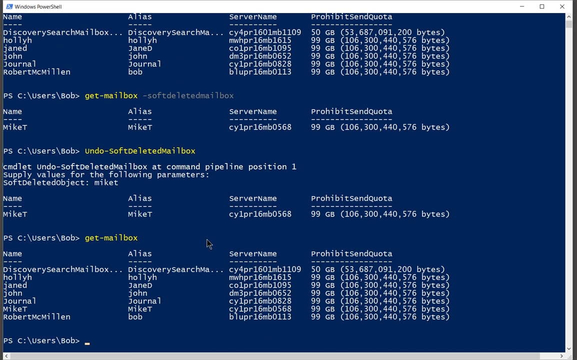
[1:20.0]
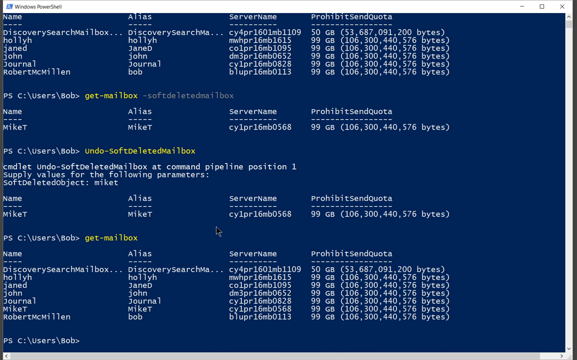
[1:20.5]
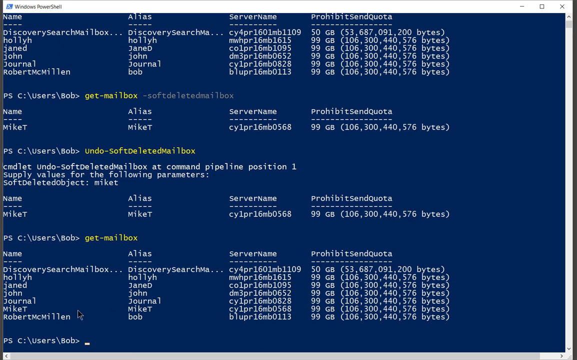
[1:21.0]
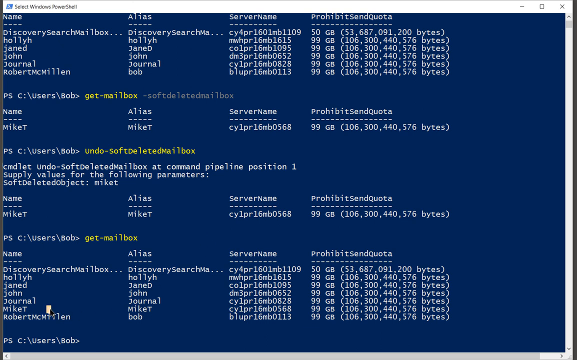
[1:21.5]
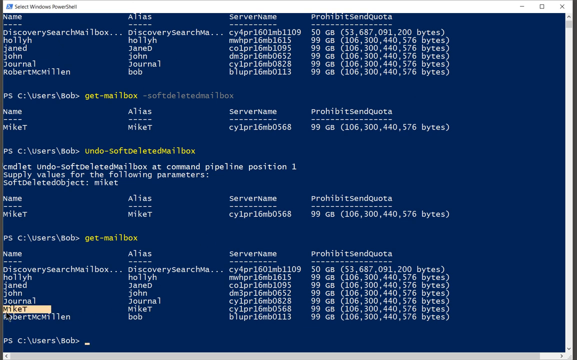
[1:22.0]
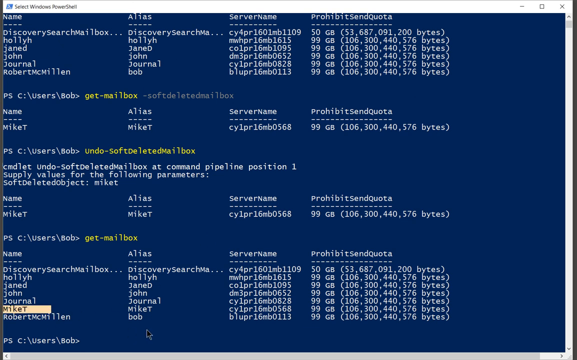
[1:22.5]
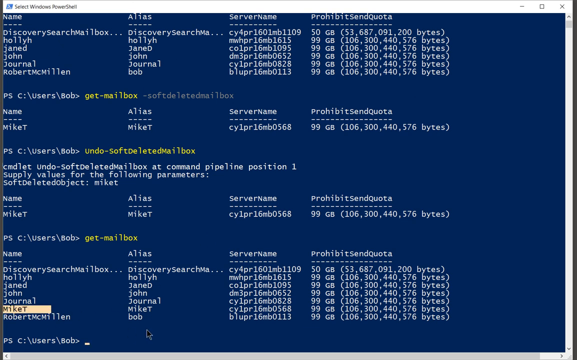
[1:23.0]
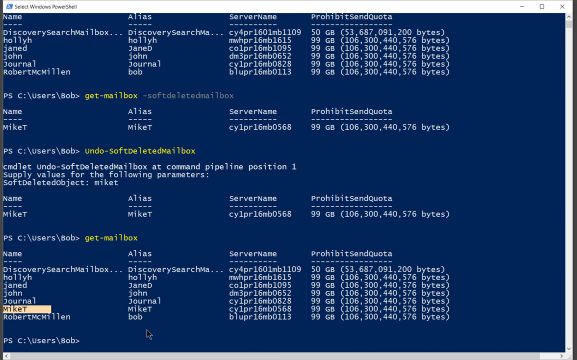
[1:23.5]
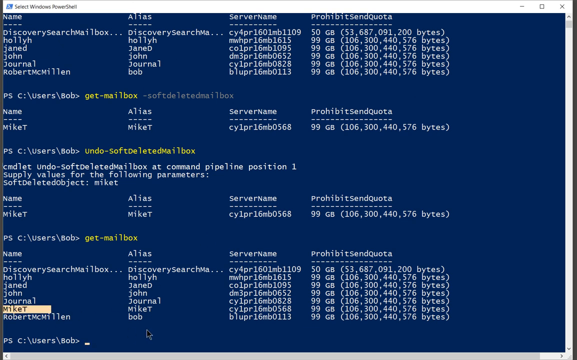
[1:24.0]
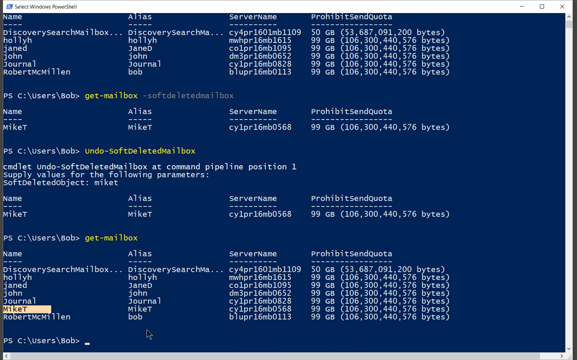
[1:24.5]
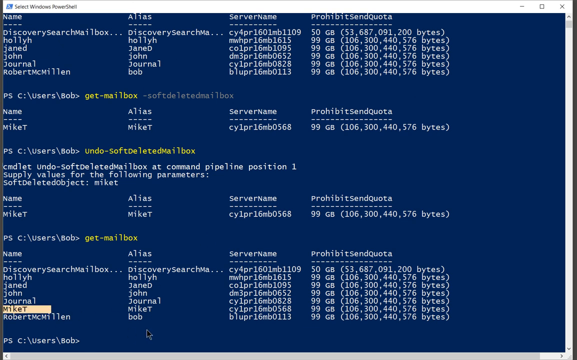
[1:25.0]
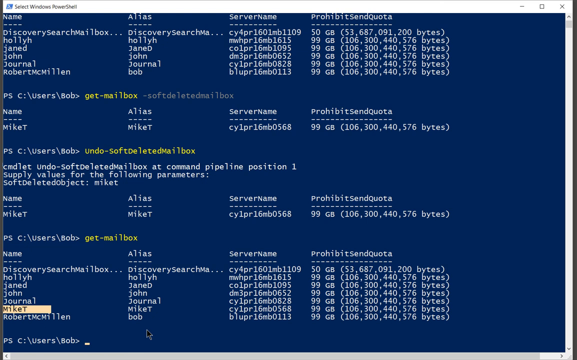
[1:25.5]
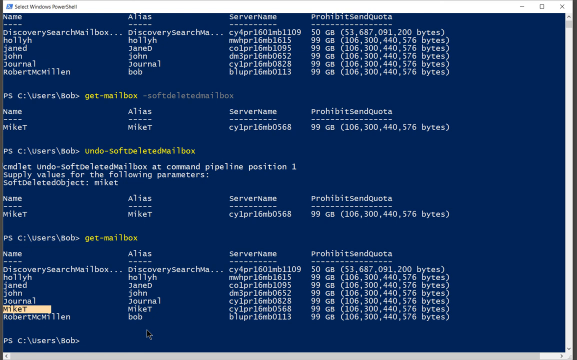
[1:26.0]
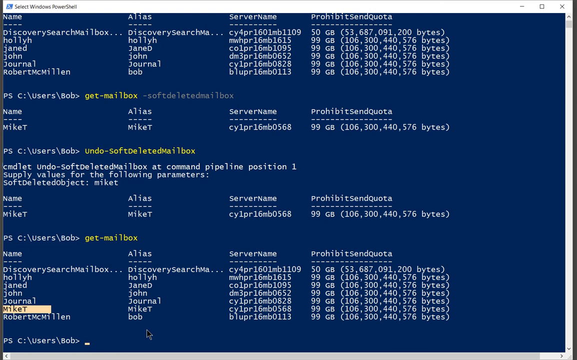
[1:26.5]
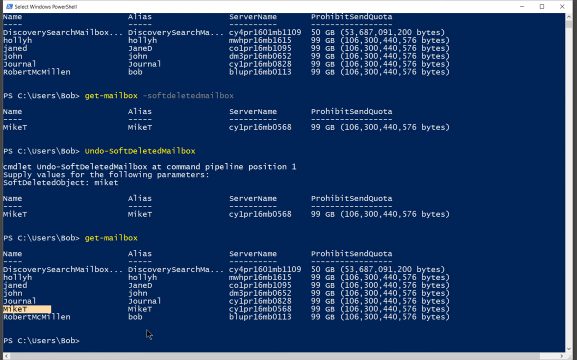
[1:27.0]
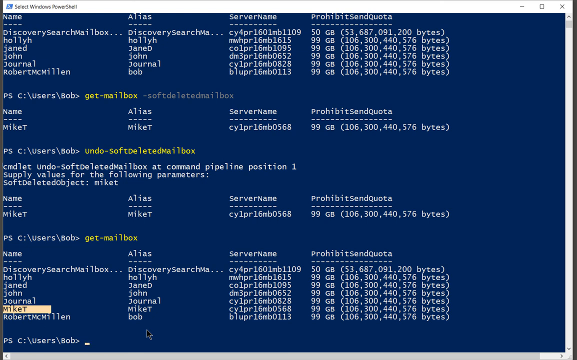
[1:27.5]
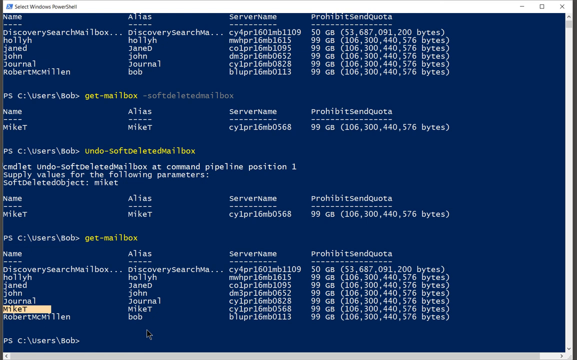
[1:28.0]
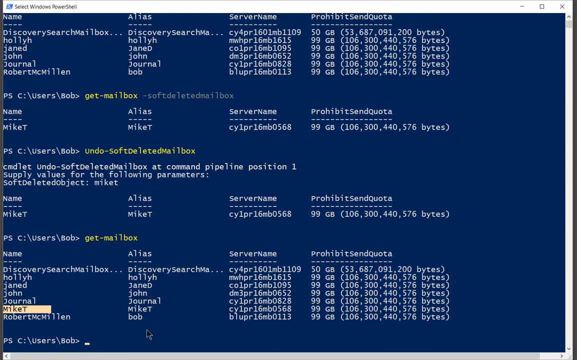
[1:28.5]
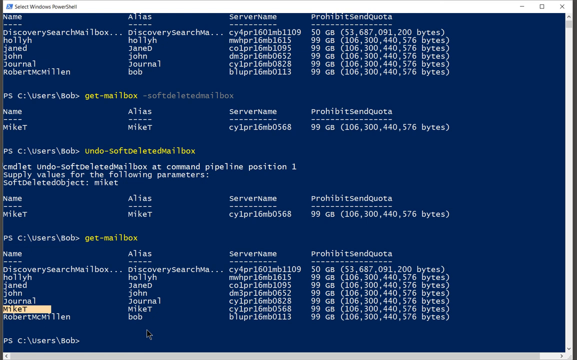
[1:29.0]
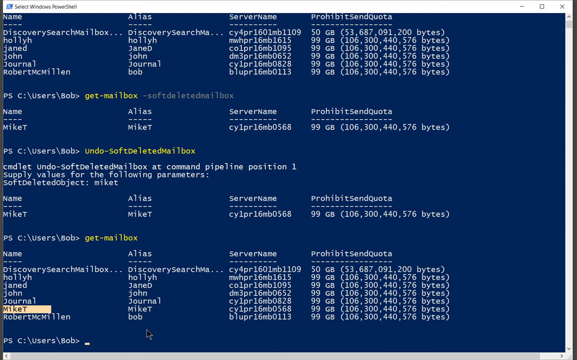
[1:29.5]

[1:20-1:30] A lot of written code is shown, with a list of names and some highlighted places. The names are on one side and the numbers are on the other side. The background is blue, the text is written in white, and some areas are highlighted in yellow.